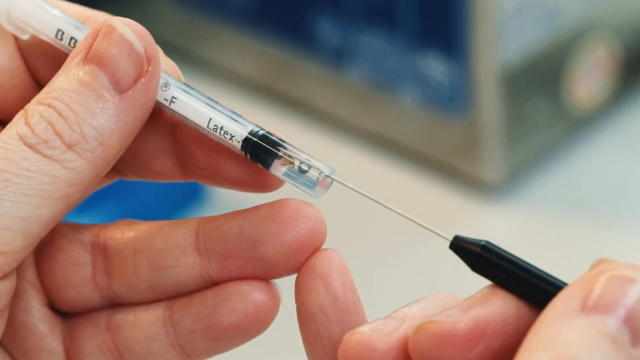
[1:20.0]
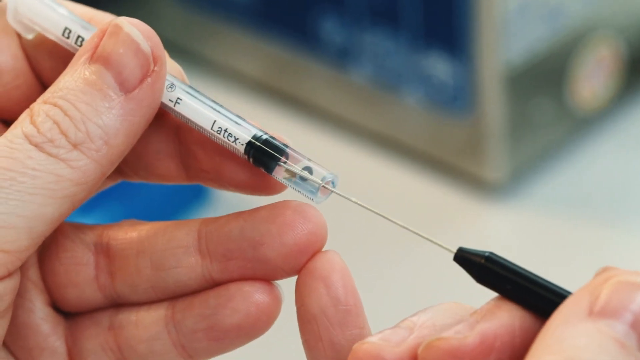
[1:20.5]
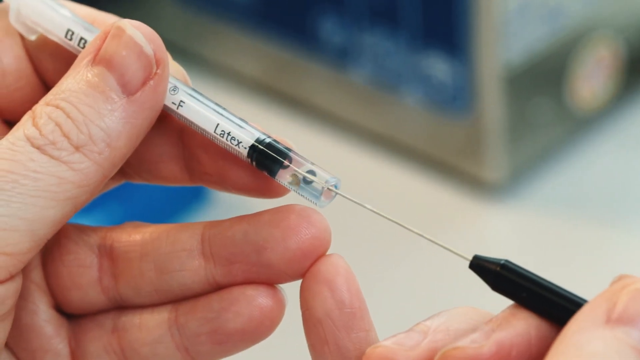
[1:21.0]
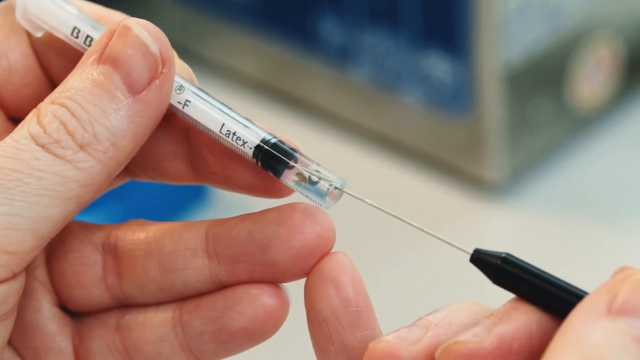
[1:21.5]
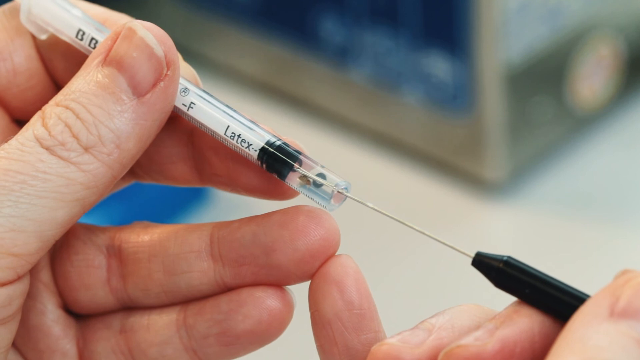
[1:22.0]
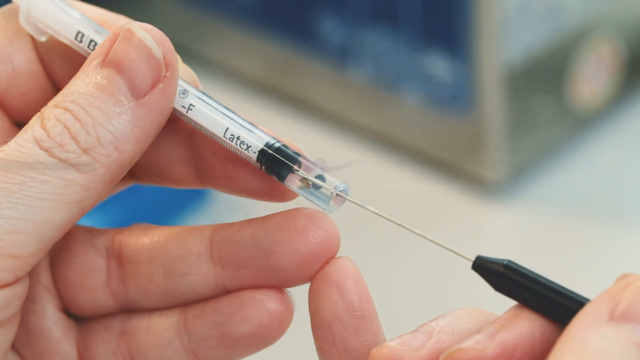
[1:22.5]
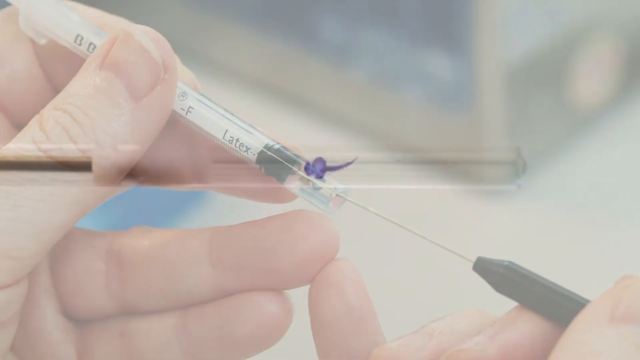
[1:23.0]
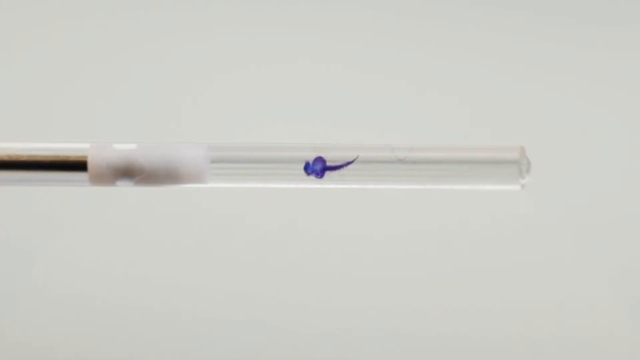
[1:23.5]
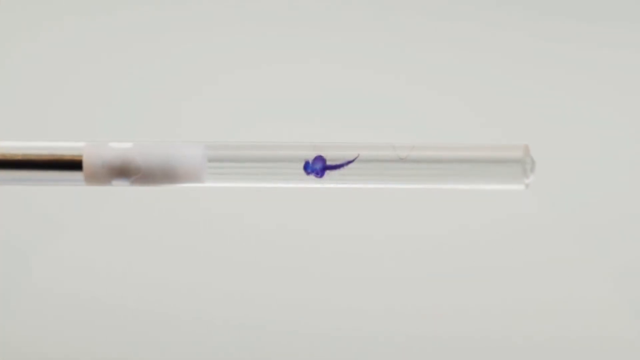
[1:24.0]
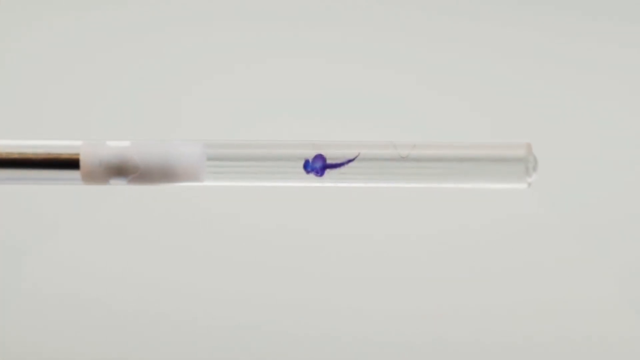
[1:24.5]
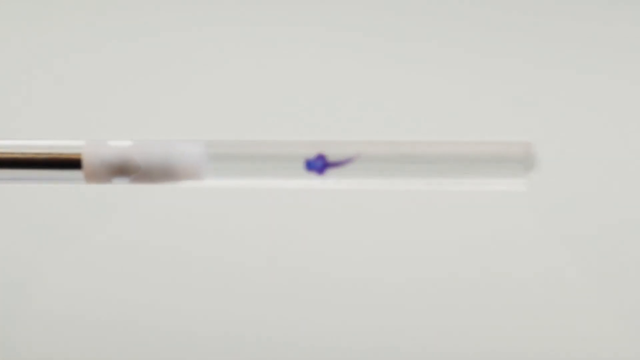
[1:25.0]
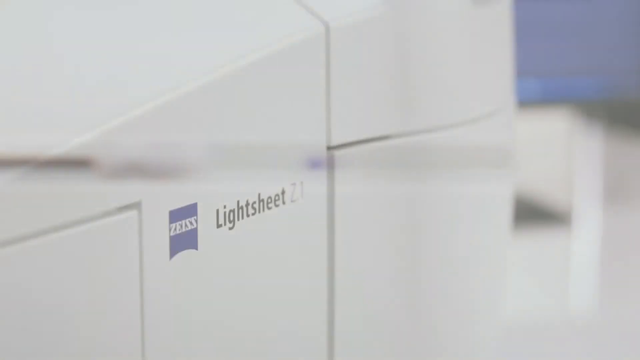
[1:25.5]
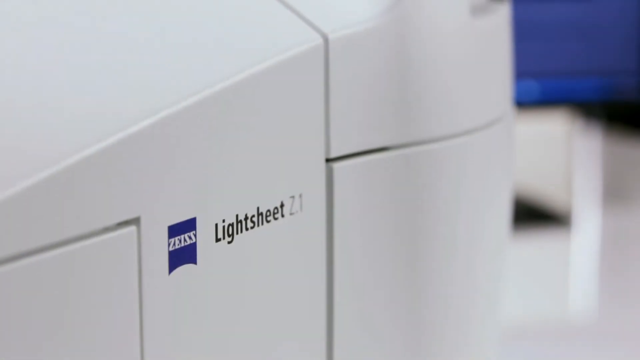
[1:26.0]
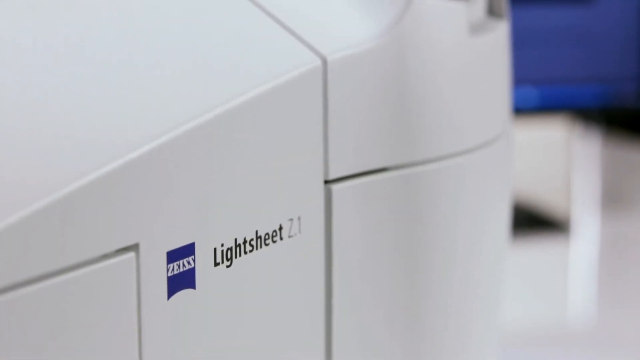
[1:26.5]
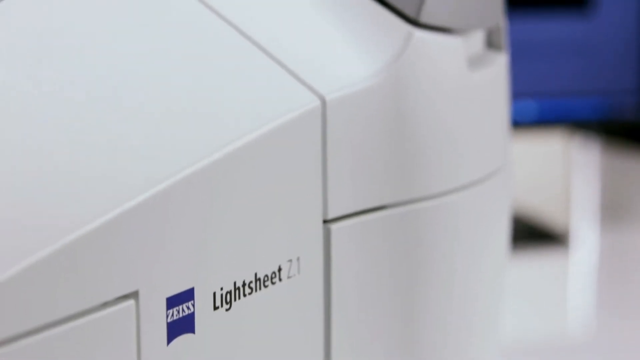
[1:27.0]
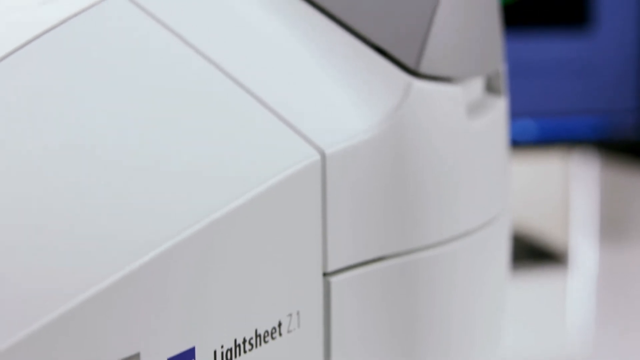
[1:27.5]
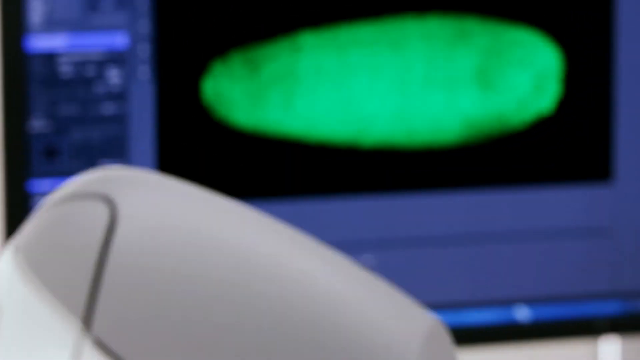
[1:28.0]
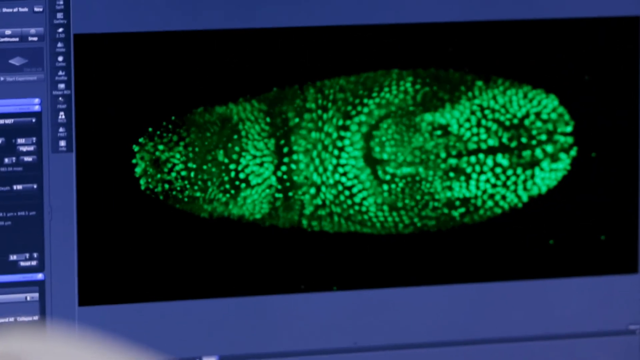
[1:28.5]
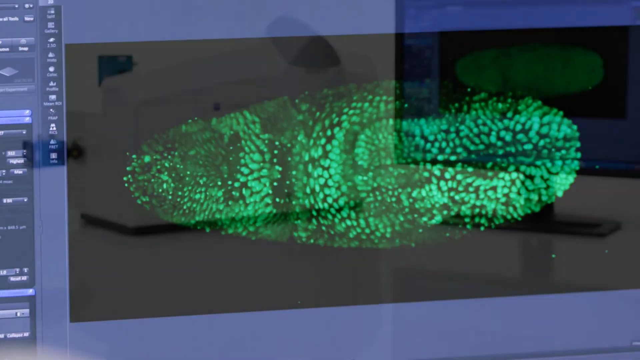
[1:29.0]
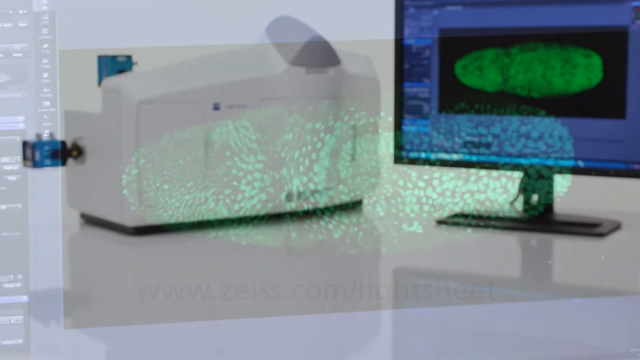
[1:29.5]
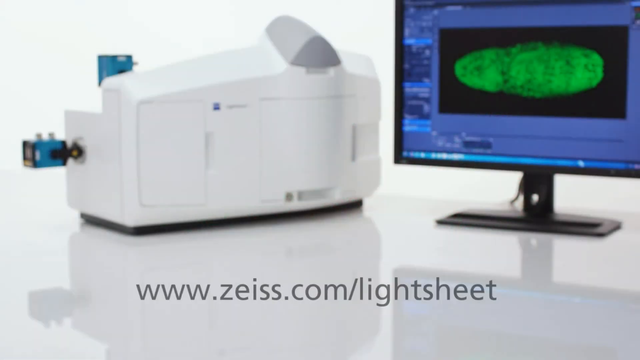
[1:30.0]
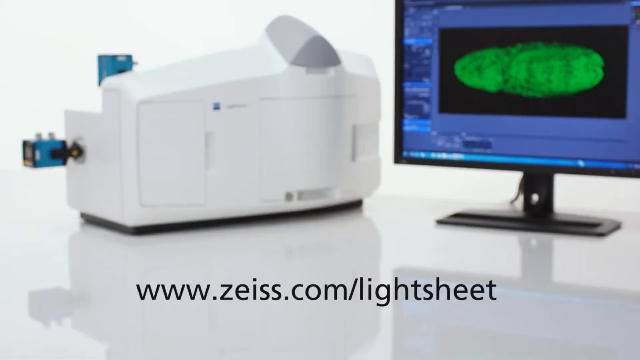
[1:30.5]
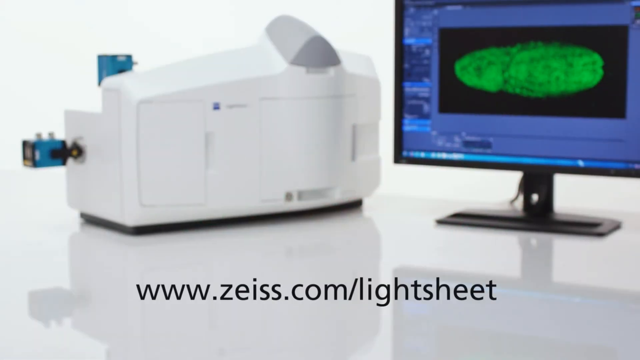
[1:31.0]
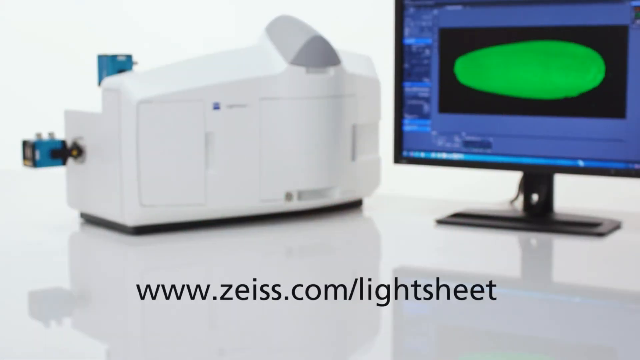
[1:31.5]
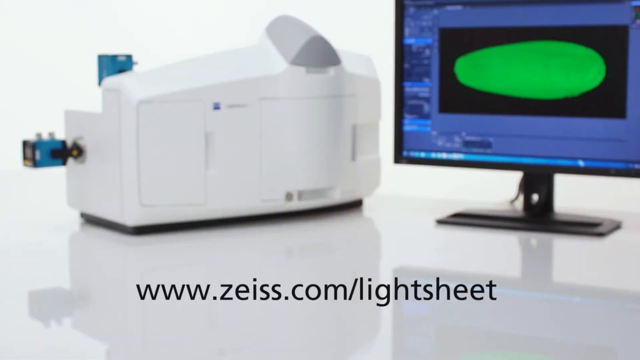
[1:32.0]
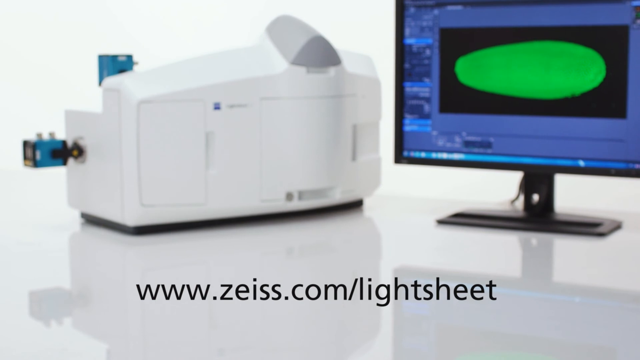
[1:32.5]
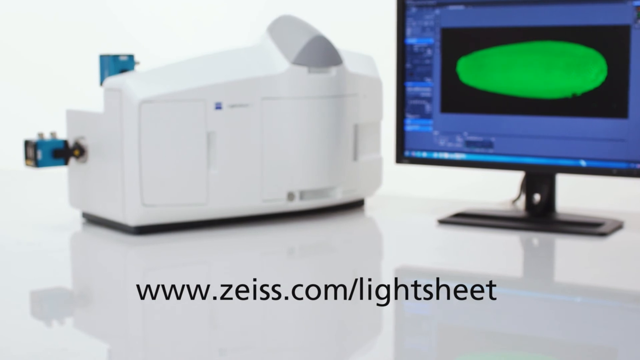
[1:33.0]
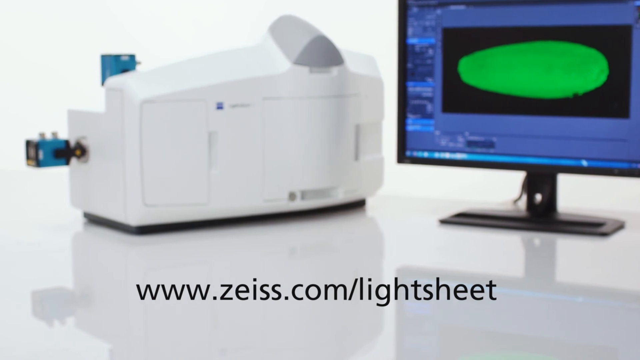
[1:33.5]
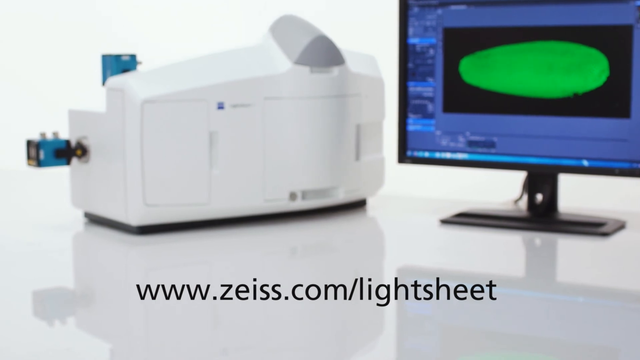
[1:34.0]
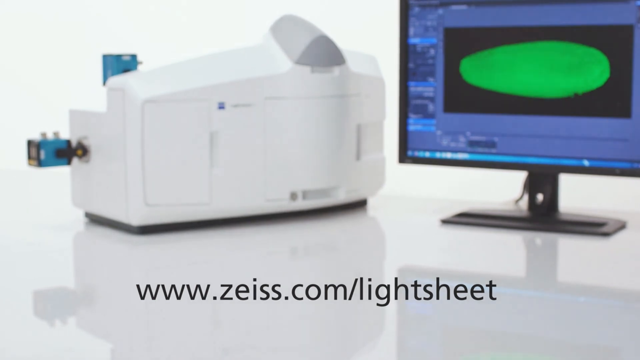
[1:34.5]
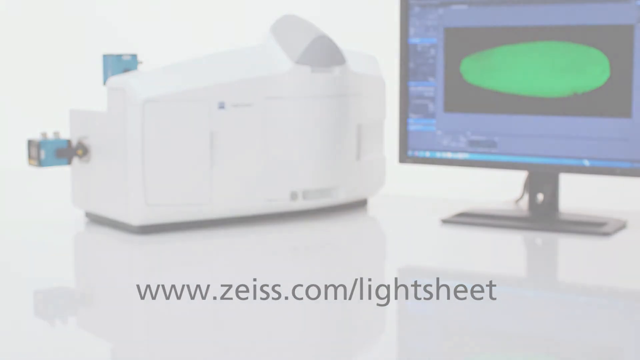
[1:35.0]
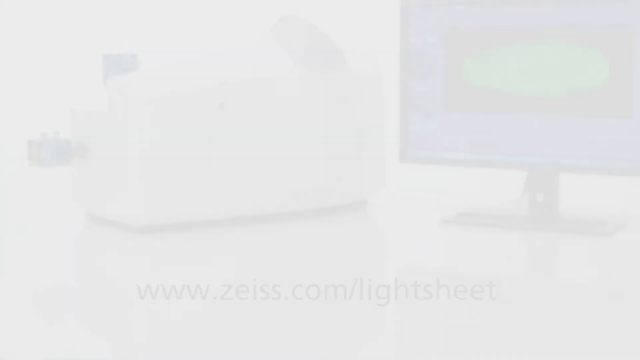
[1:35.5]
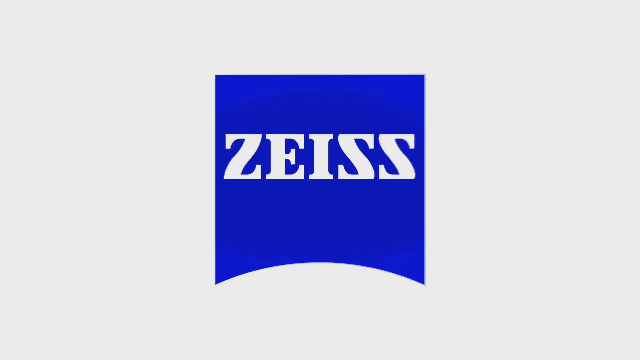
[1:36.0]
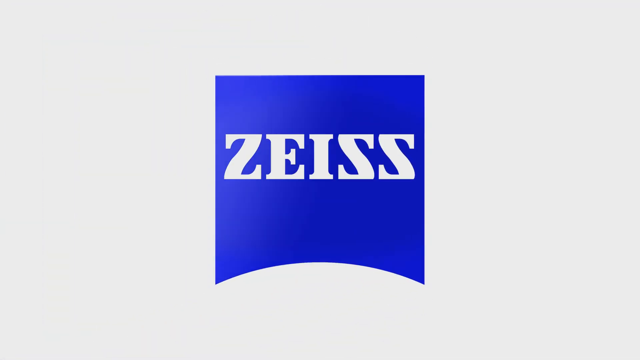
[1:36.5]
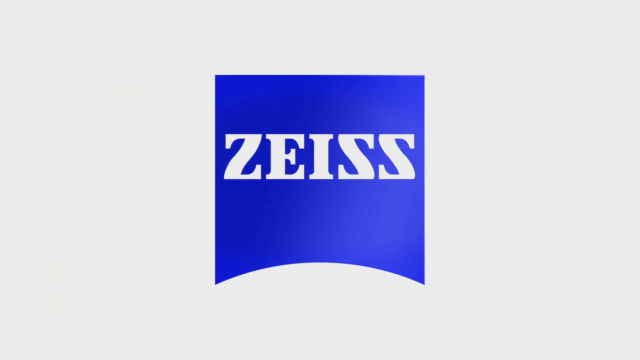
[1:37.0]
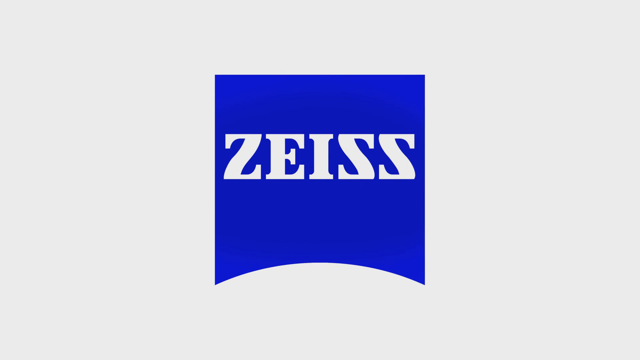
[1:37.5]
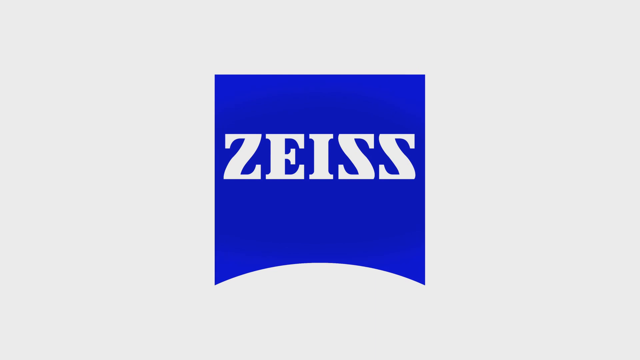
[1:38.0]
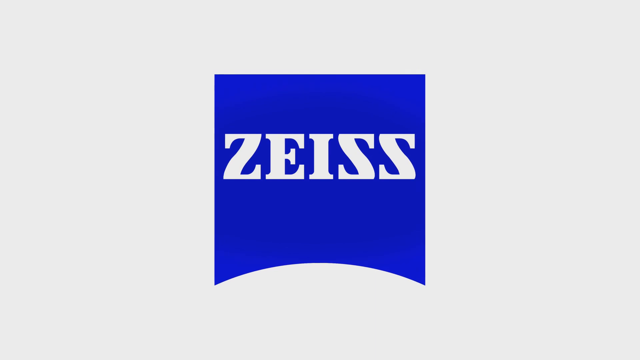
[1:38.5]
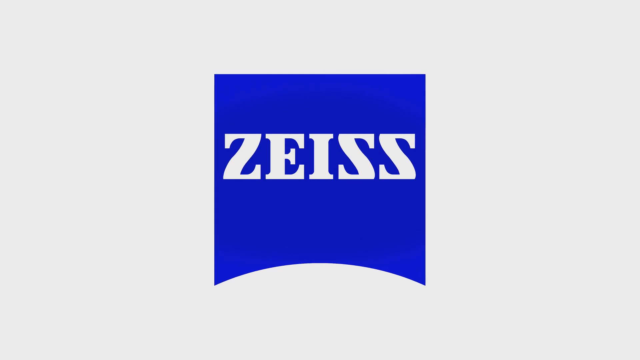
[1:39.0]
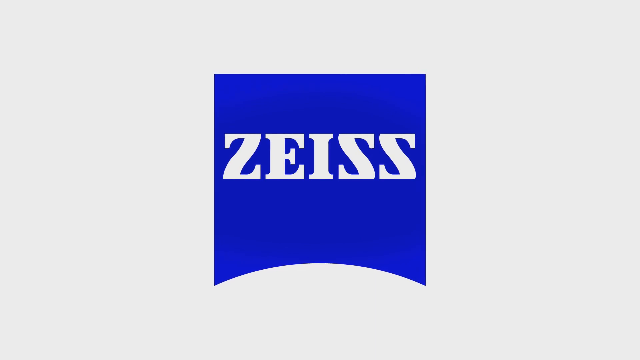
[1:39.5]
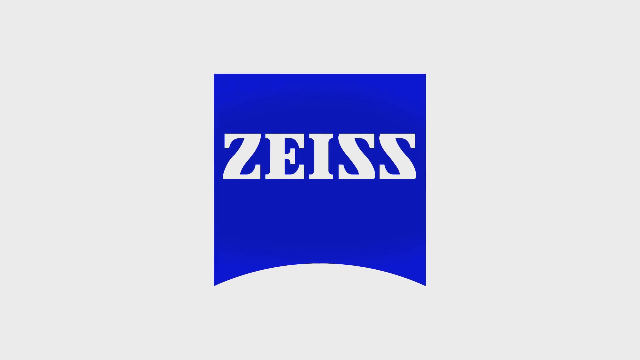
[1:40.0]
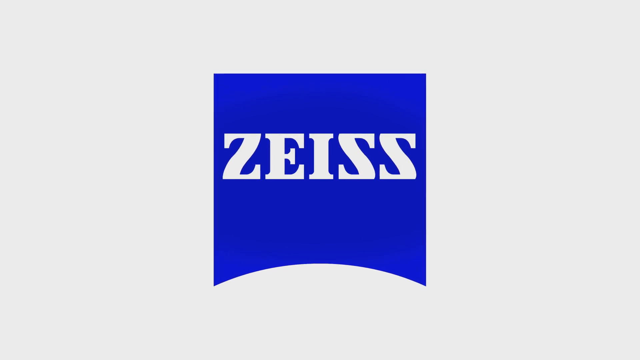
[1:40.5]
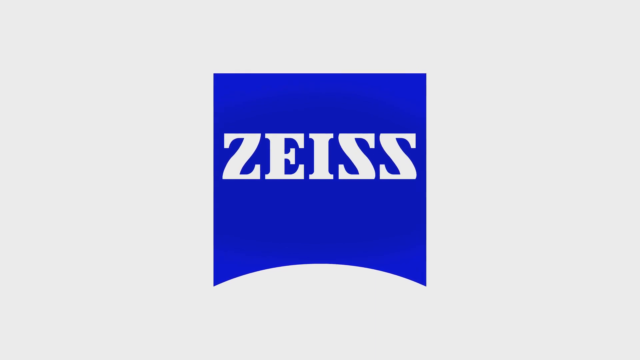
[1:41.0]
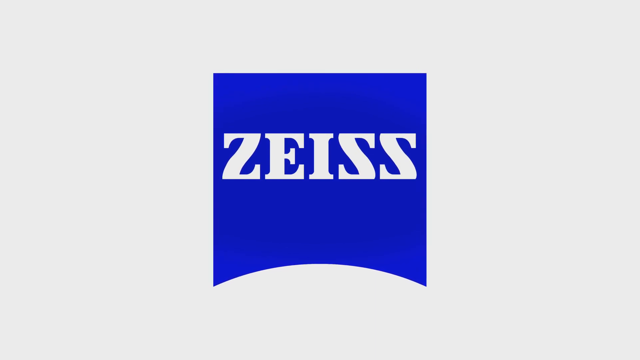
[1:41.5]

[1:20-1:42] Somebody's left hand holds a very thin plastic tube, and their right hand holds an item with a black tip, at the end of which looks to be a needle. They put the needle into the clear tube. A close-up shows the tube in the center of the screen, with some kind of purple item in its center that almost has a little tail. The view zooms in slightly, then fades out. Next is a close-up of one of the white machines that almost looked like a printer, reading "Light Sheet Z.1". The camera pans upward, then upward and slightly to the right to the computer monitor, which mainly shows a green, long, oval-shaped cell or group of cells. The view fades to a zoomed-out shot of a white desk with the white machine and the monitor sitting right next to it. At the bottom, text reads "www.zeiss.com/Light Sheet". The monitor changes slightly. That fades away, and the ZEISS logo appears in the center of the screen.